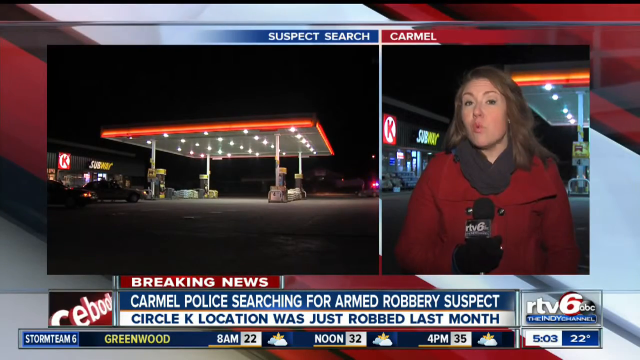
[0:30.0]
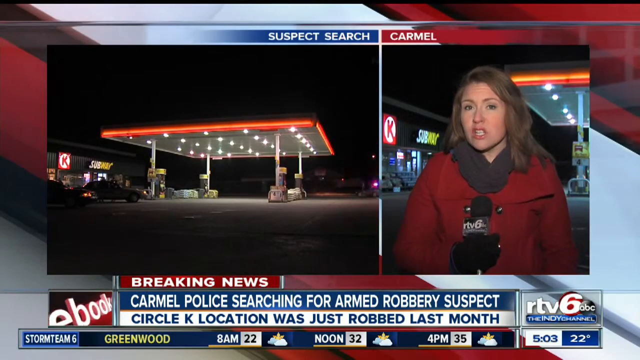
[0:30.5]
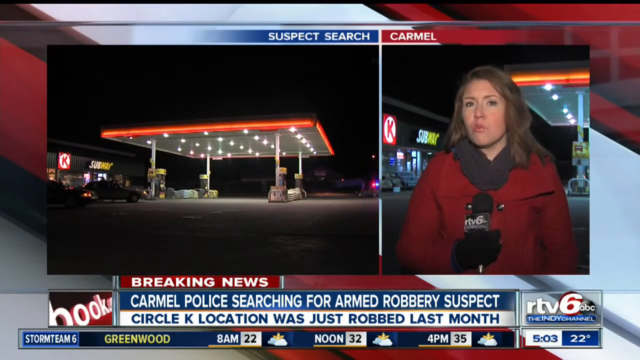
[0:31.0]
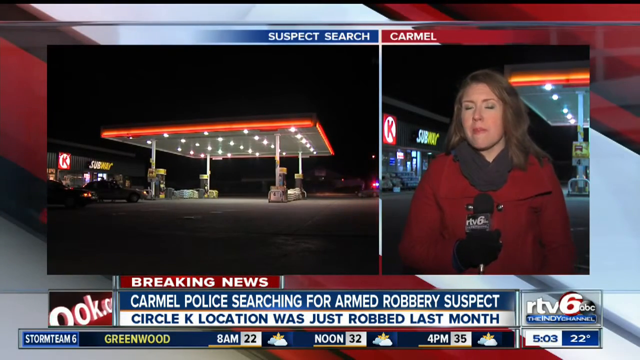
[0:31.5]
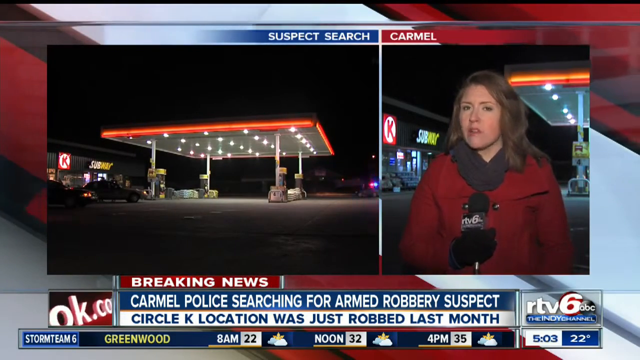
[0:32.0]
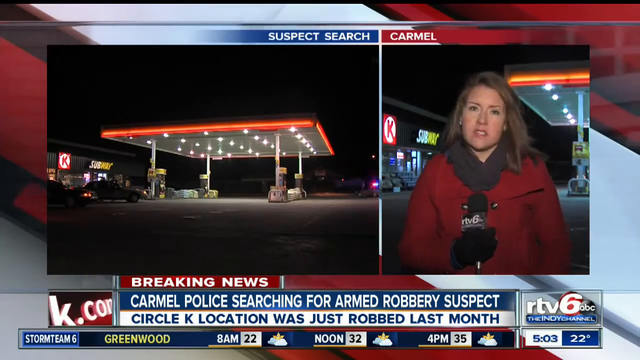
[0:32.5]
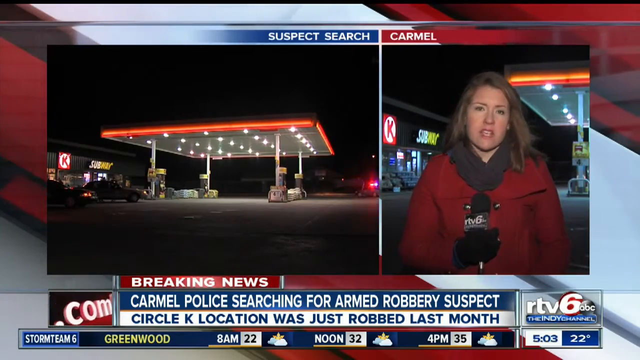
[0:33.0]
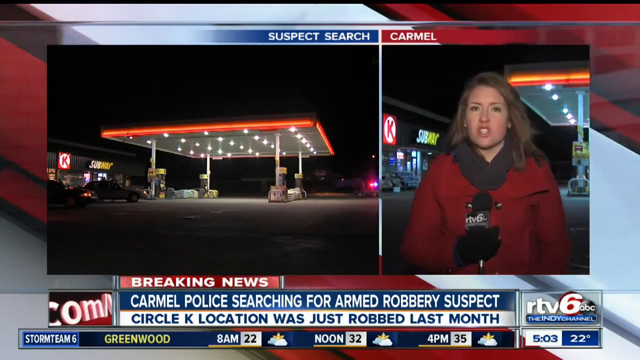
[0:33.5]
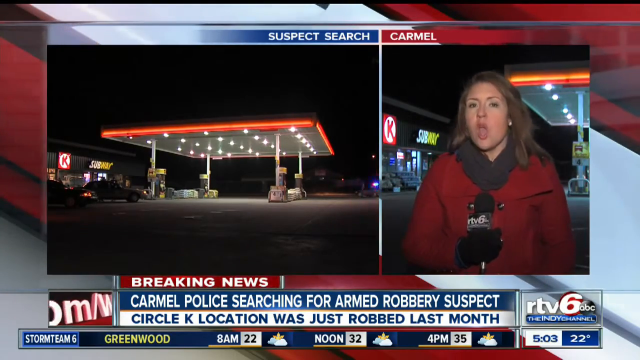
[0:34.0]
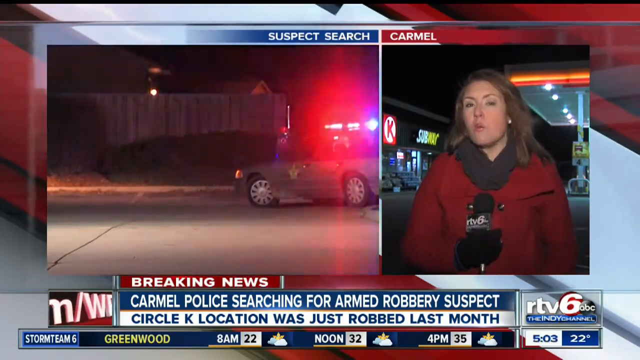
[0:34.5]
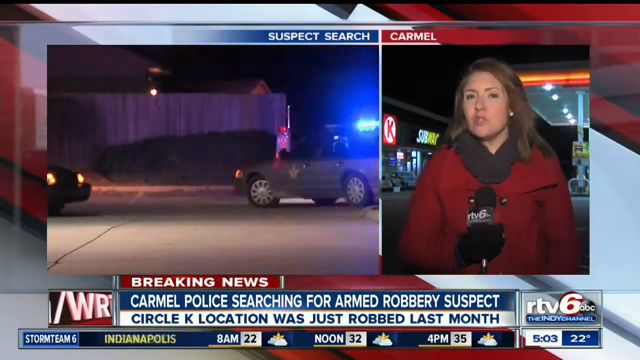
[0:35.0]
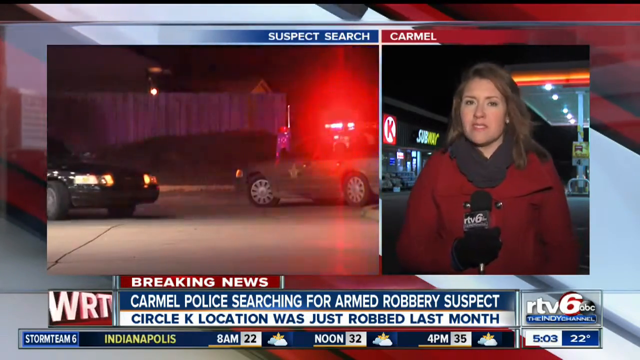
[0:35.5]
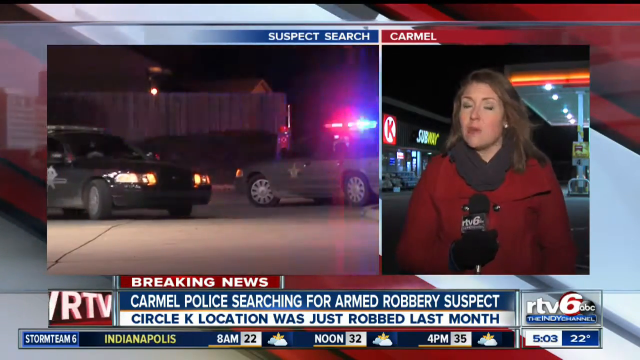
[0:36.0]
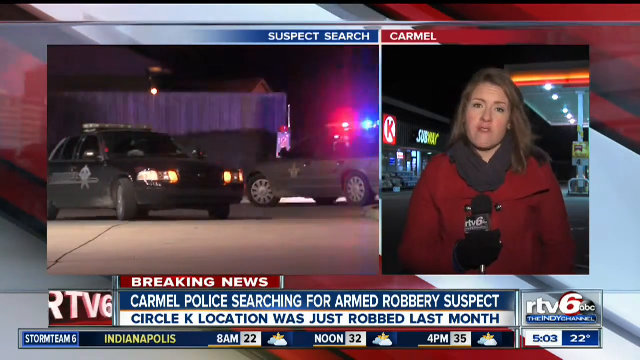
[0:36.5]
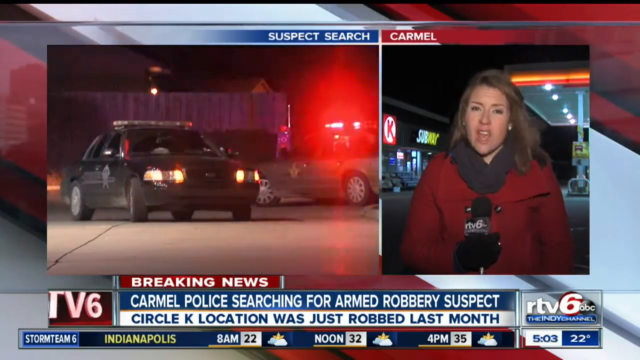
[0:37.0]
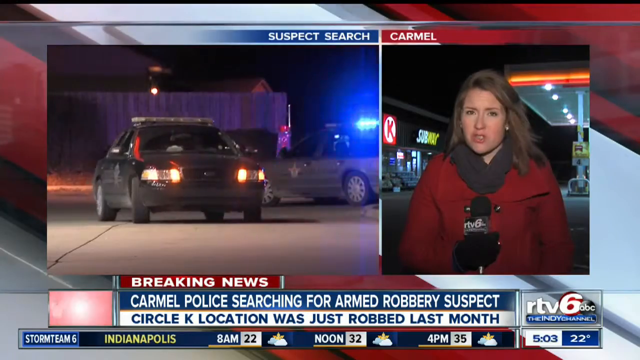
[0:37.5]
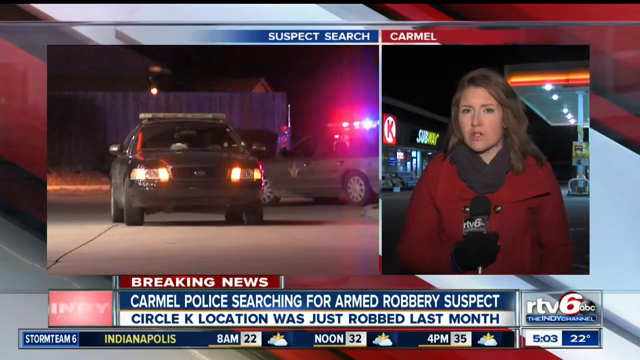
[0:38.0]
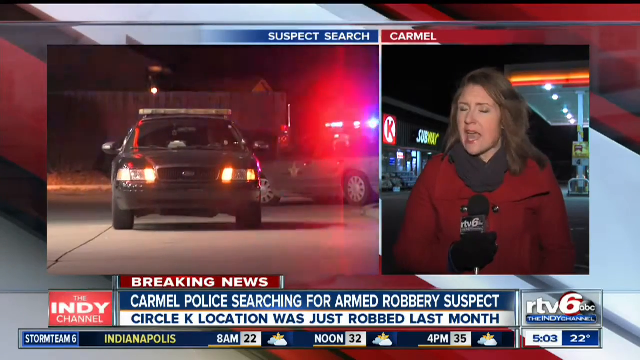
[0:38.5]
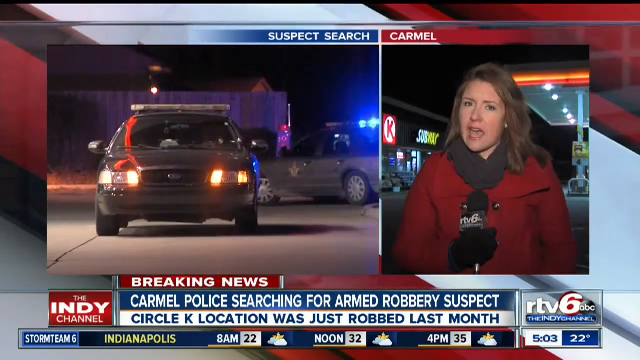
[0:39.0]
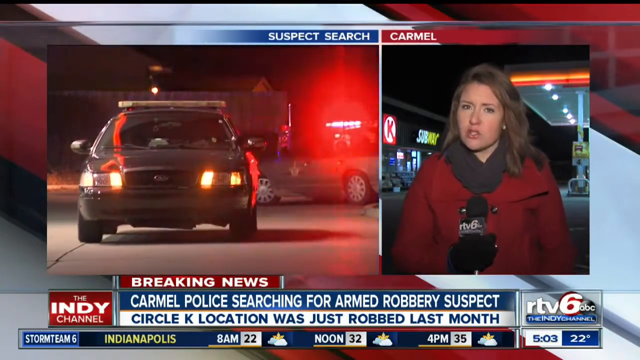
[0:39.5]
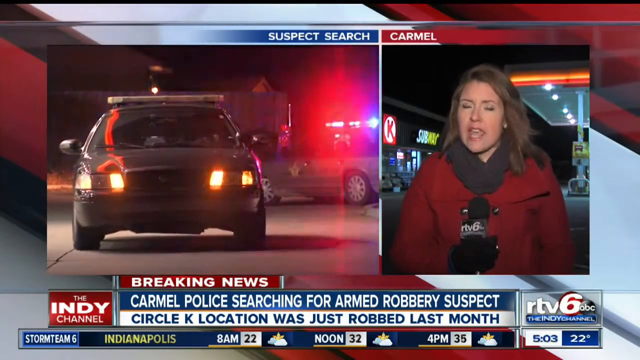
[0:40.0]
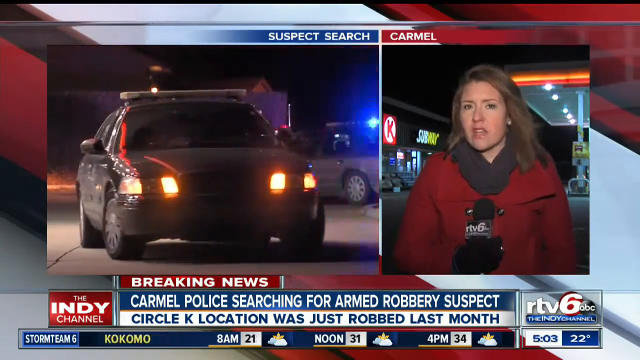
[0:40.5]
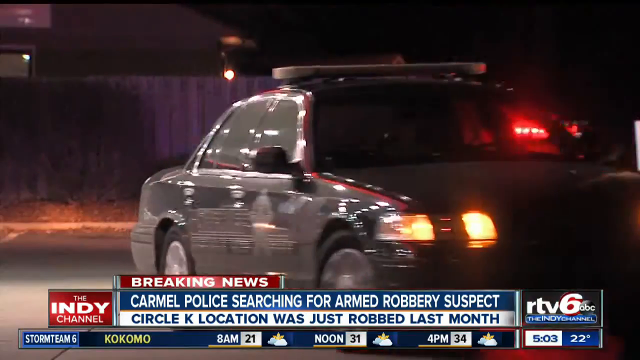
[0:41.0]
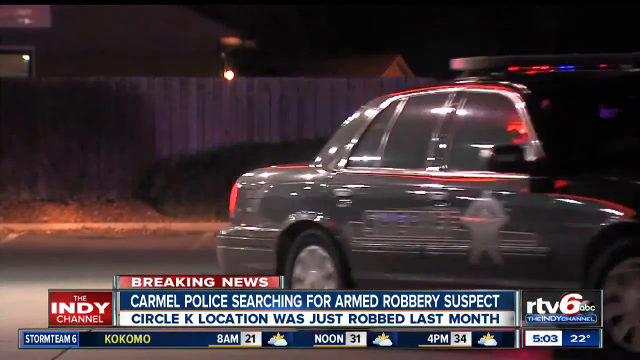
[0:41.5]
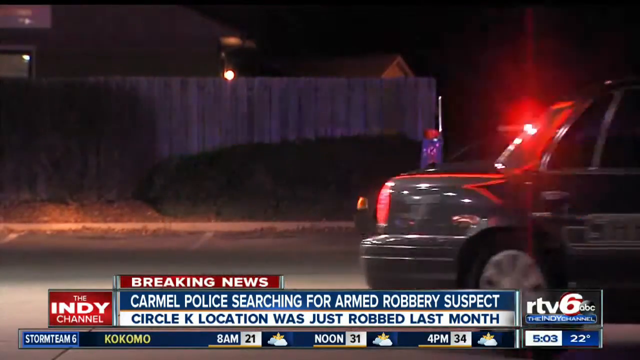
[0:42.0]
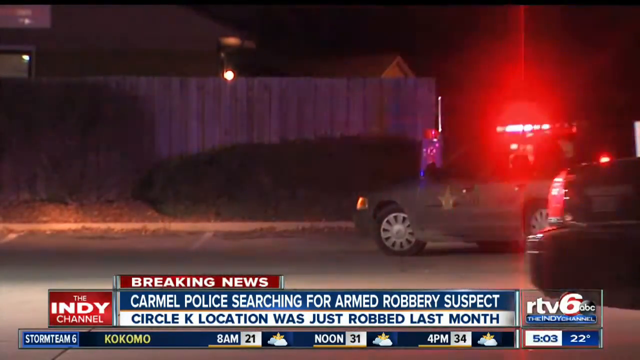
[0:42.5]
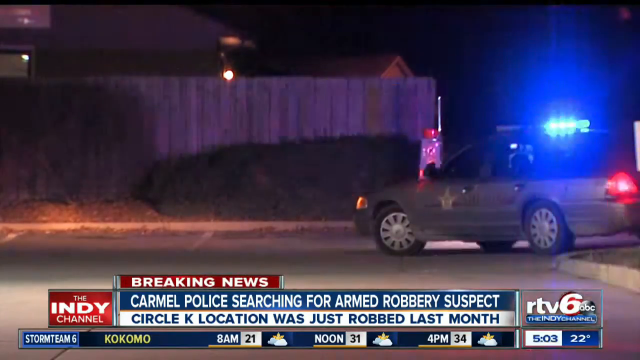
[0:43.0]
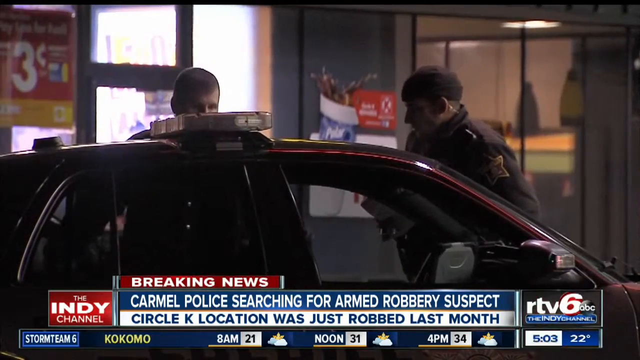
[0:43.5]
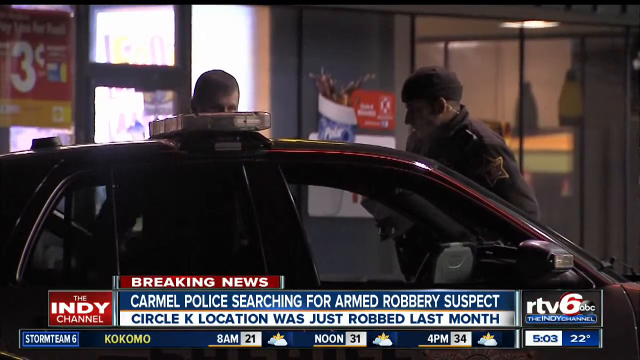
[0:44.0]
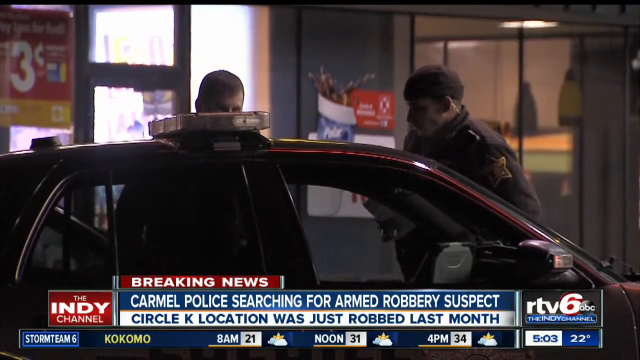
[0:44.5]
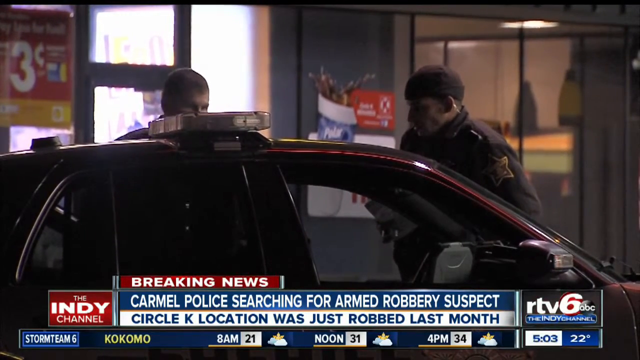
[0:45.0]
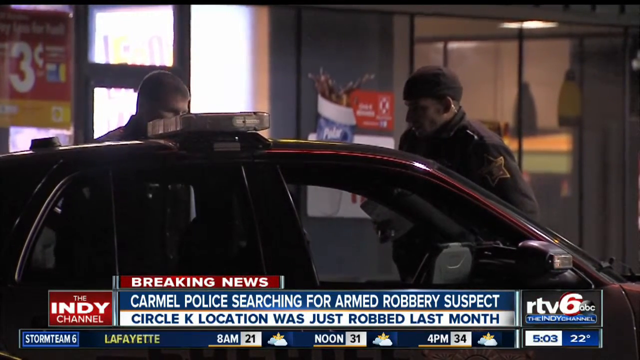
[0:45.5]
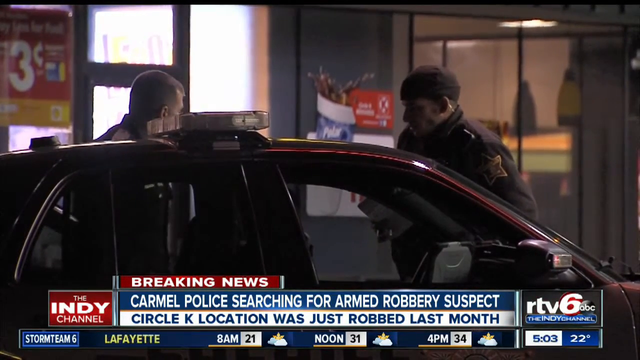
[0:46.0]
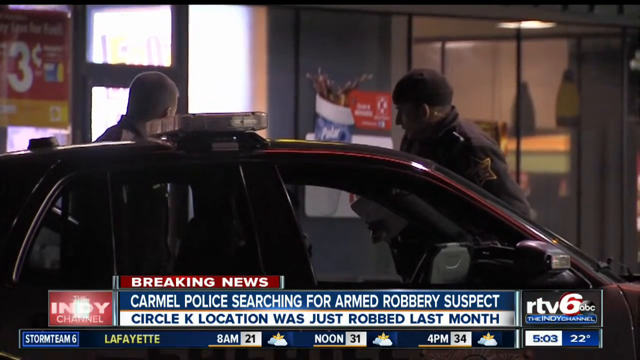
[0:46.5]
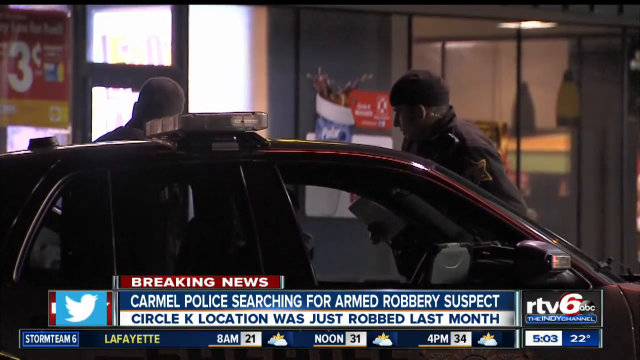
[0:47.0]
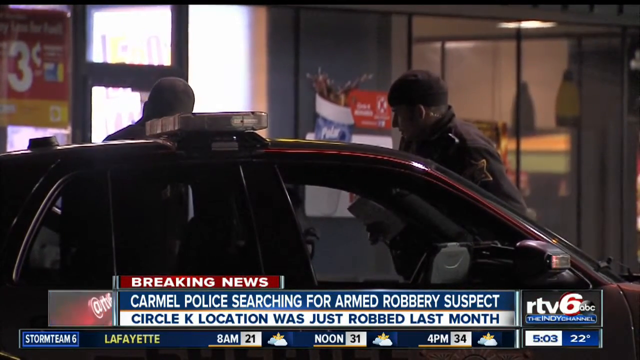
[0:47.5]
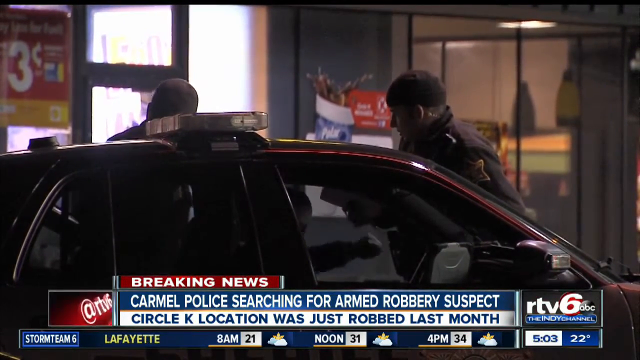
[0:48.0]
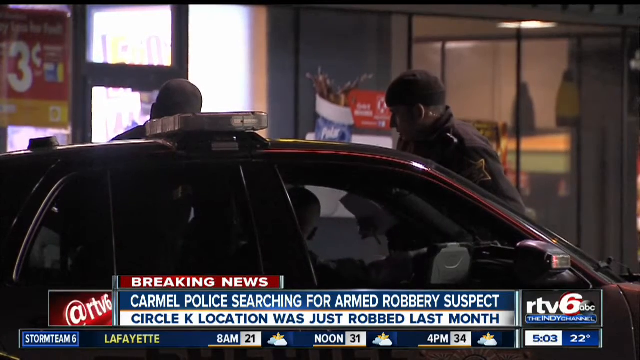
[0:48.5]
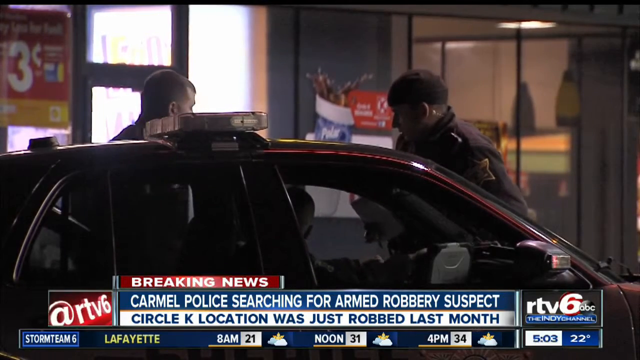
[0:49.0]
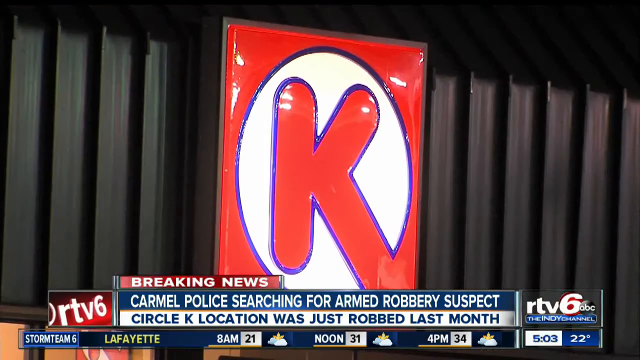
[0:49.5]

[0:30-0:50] The reporter stands out in front of a Circle K, and the camera zooms in on her. She holds a microphone up in her right hand in front of her chest, faces the camera, and wears a red coat. At the top of the screen it says "Carmel." On the left side of the screen is a zoomed-up image of the gas station, in which the reporter isn't present. The footage shows some police cars, one parked with its light flashing. One car drives in from the left side of the screen, turns, and begins driving toward the camera, while the woman is still talking on the left side of the screen. The view zooms in on the car and the footage takes up the full screen, and the car drives to the right side of the screen. Two police officers then stand behind a police car that faces the right side of the screen. They are sort of facing the camera and talking, then both turn around and look back at a storefront behind them. A manager is visible in the window of the storefront.